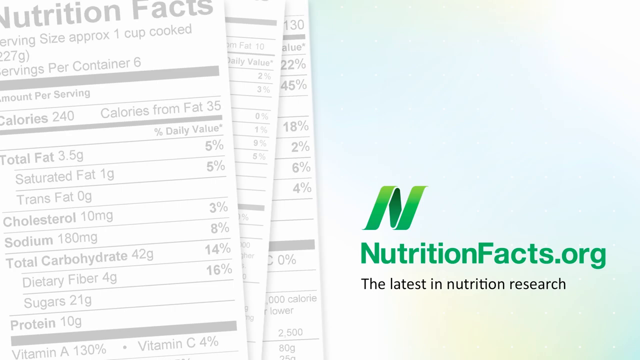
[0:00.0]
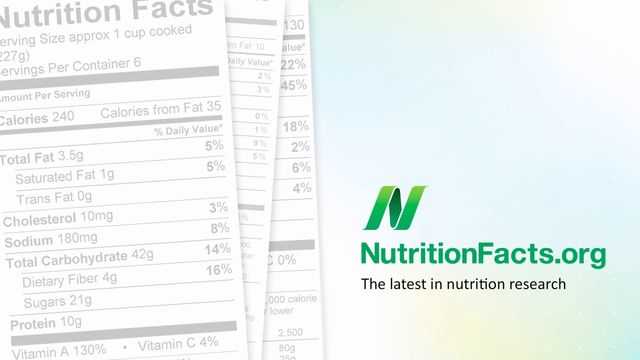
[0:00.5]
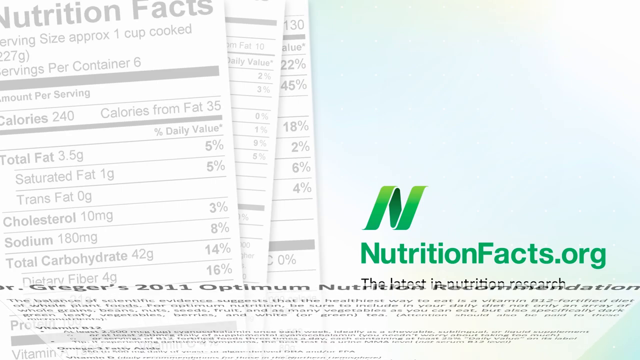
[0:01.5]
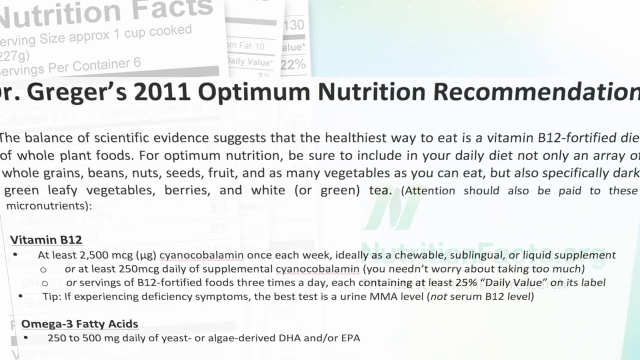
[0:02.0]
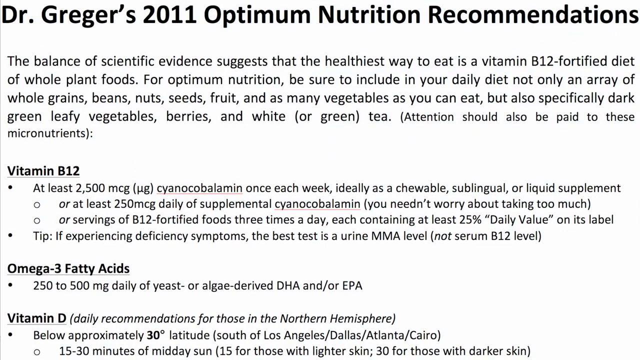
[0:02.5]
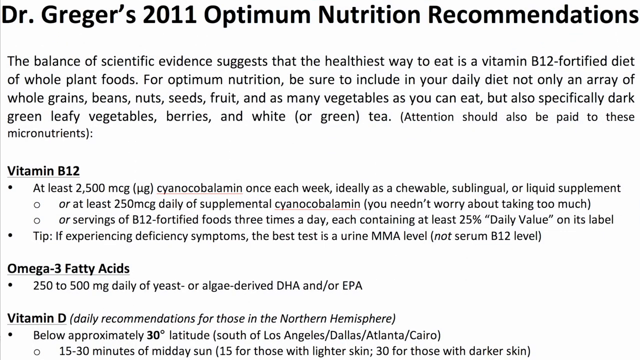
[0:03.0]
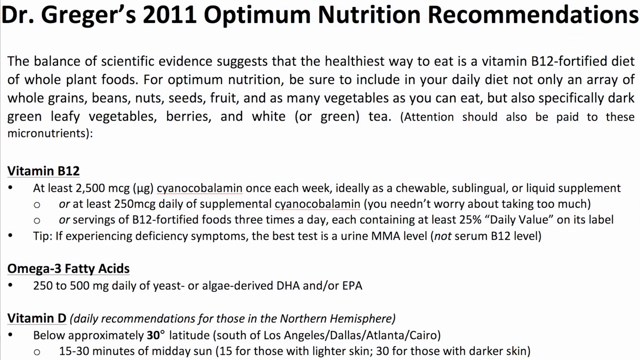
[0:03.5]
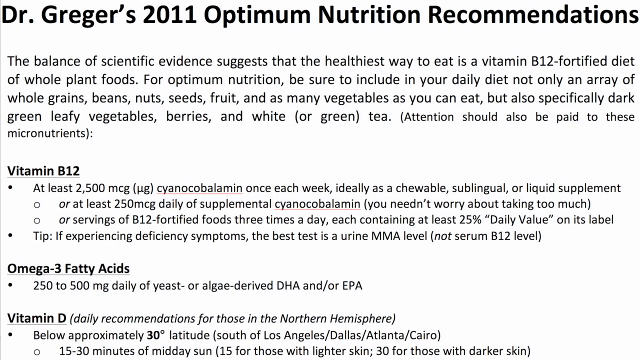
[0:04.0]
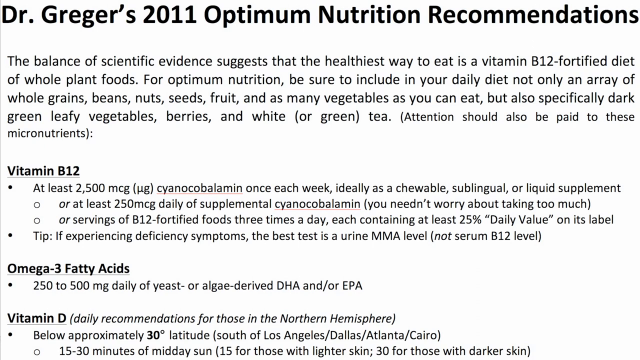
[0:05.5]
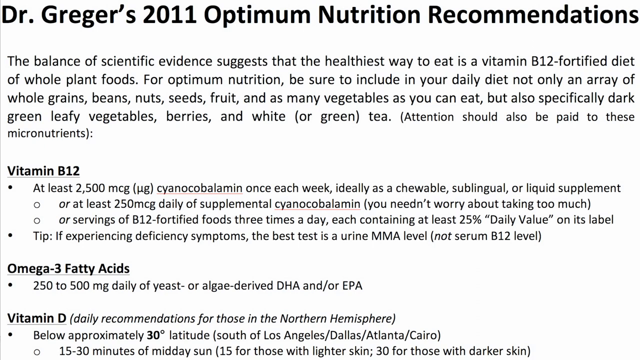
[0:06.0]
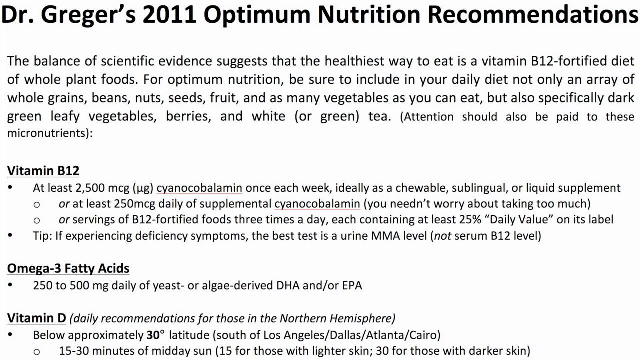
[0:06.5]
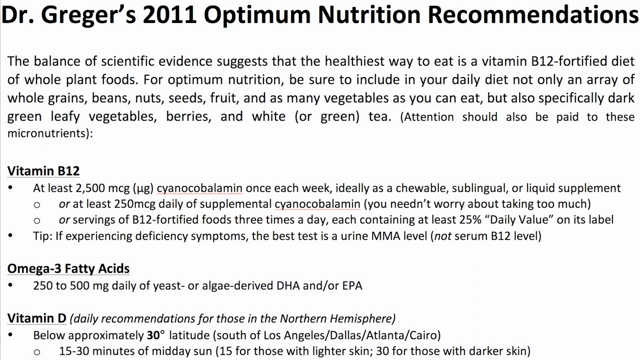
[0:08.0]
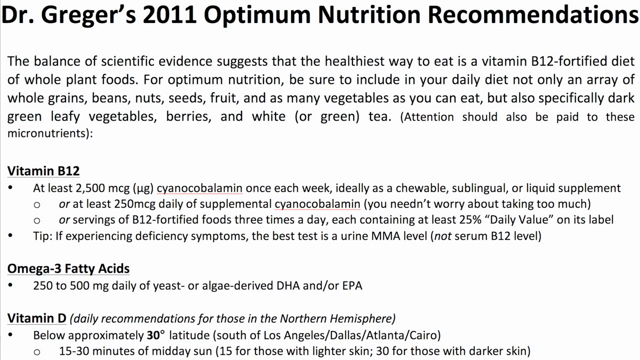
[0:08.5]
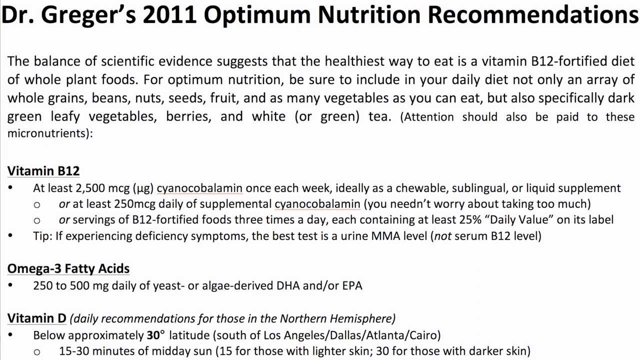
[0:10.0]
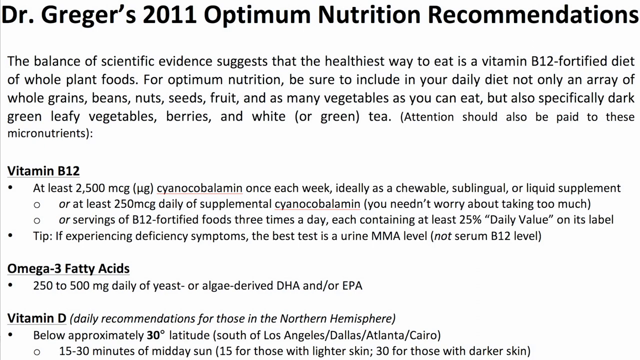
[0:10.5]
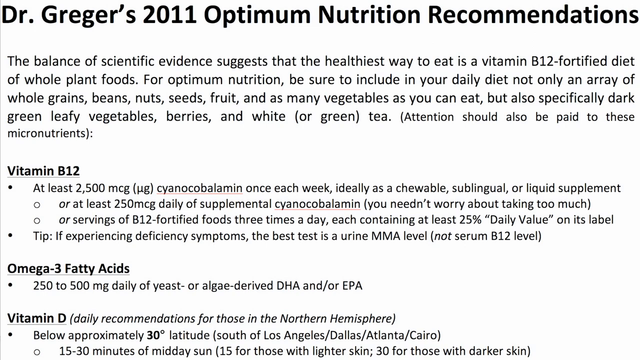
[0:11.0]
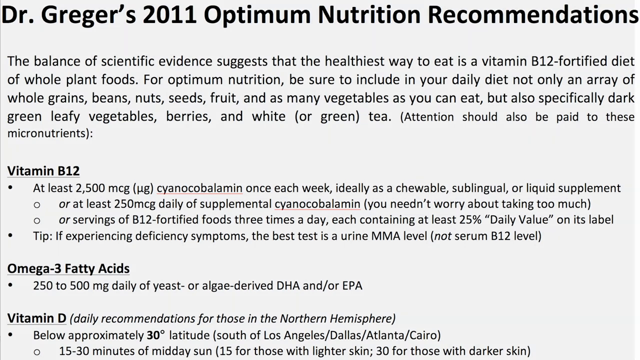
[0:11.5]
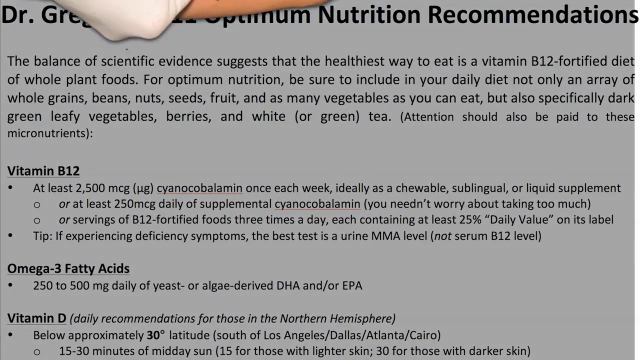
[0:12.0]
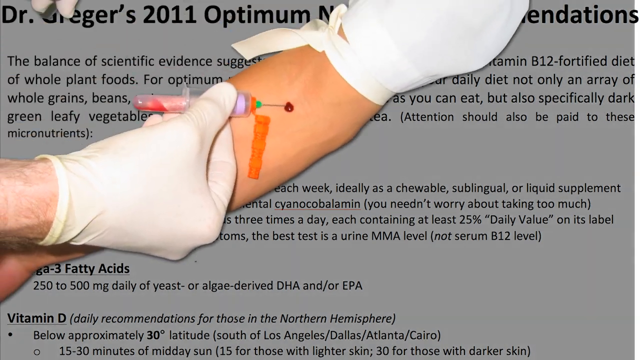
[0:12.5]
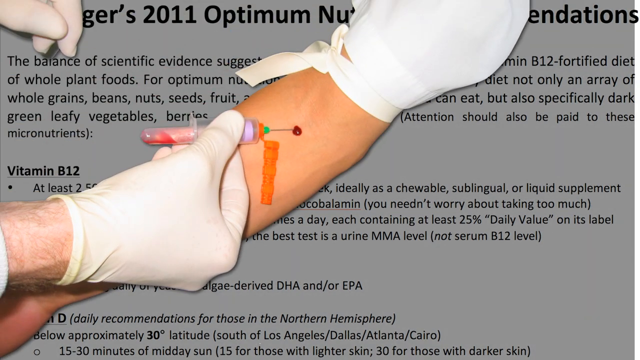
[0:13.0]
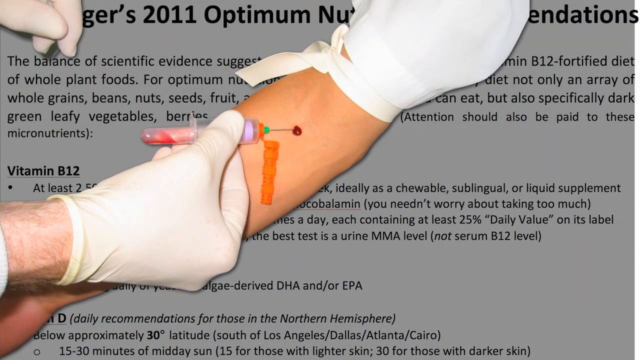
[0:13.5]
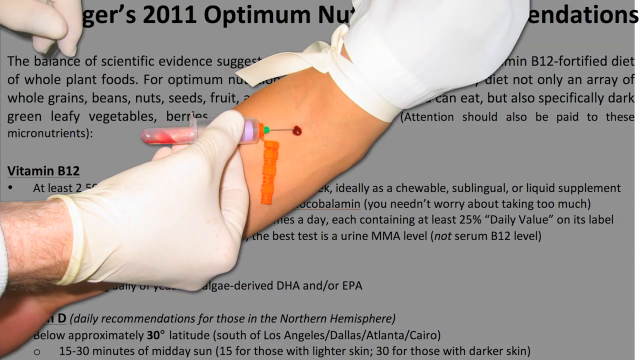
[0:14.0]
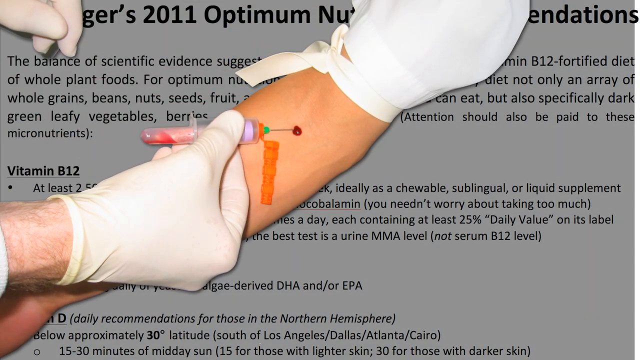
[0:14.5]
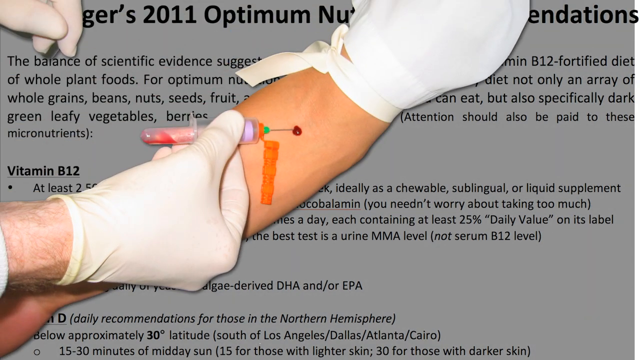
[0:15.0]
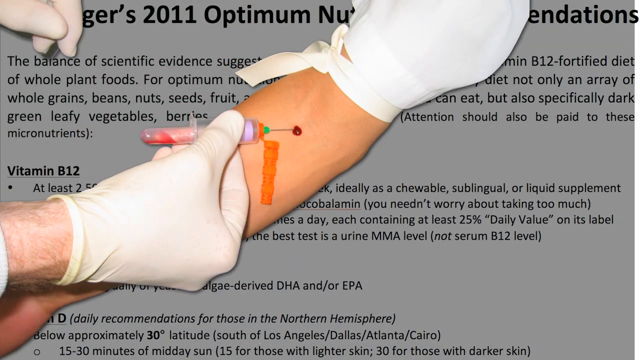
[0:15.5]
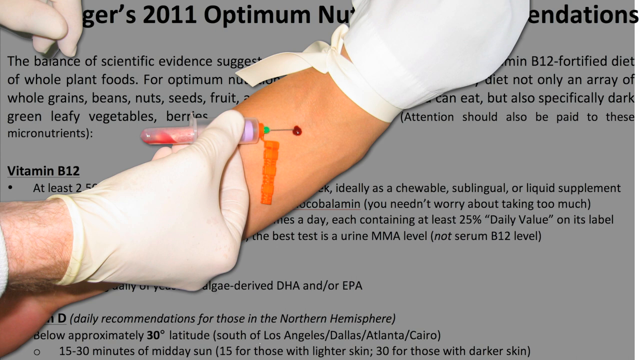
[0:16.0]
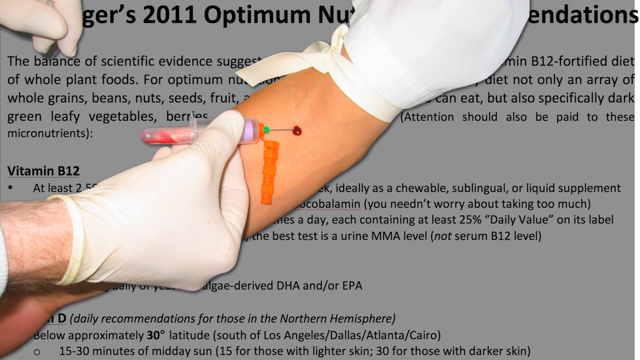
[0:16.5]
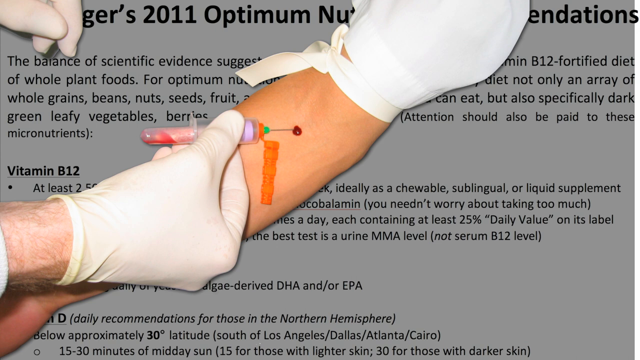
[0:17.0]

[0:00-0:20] The video opens with "NutritionFacts.org" in green text beside a green letter N logo, and underneath in black text it says "Latest in Nutrition Research." The background is light with some blue, and on the left are three overlaid images of nutrition facts like those found on the back of a food box. A white text image then flips onto the screen and covers the whole screen: a white background with black text that says "Dr. Greger's 2011 Optimum Nutrition Recommendations. The balance of scientific evidence suggests that the healthiest way to eat is a vitamin B12 fortified diet of whole plant foods." There is a lot of text on this screen: below, a "vitamin B12" heading has a few points under it, "omega-3 fatty acids" has one item under it, and "vitamin D" has some points of what look like facts or recommendations. That screen then dims, and an image of a held-out arm is overlaid. The arm has a white sleeve at the top and a rubber tourniquet band wrapped around it and tied with a bow. A speck of blood comes out of the arm where a needle is connected; a gloved hand holds the needle to the arm, and an orange cap that was covering the needle now hangs down. Some gloved fingers also appear at the top left of the screen, and the white-gloved person has a hairy wrist that is cut off out of frame on the left.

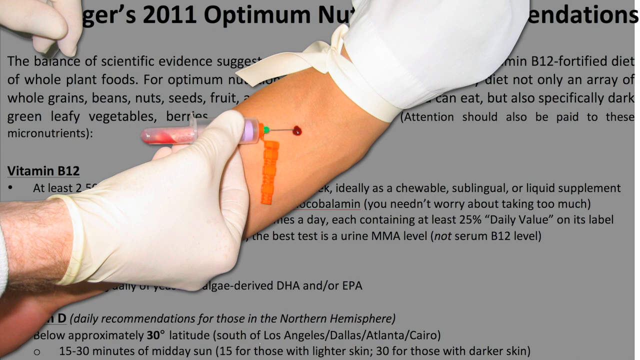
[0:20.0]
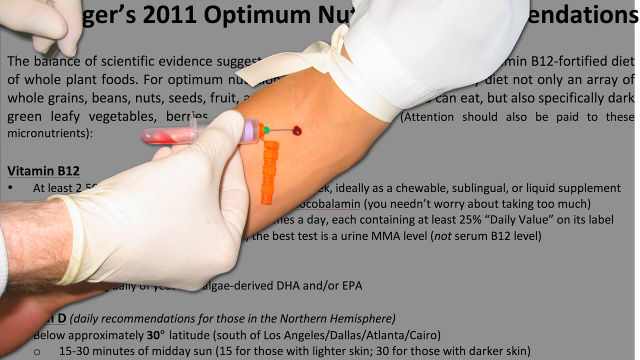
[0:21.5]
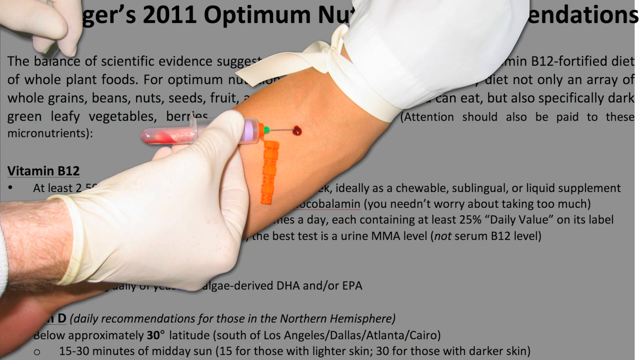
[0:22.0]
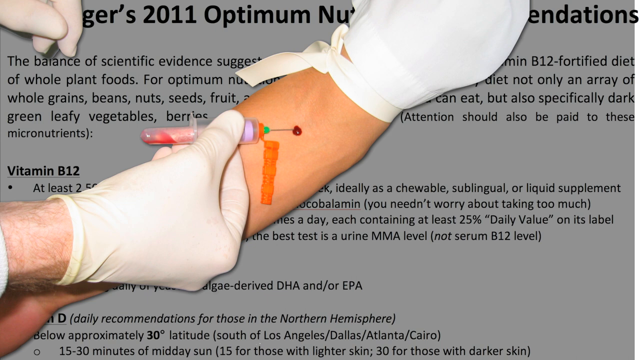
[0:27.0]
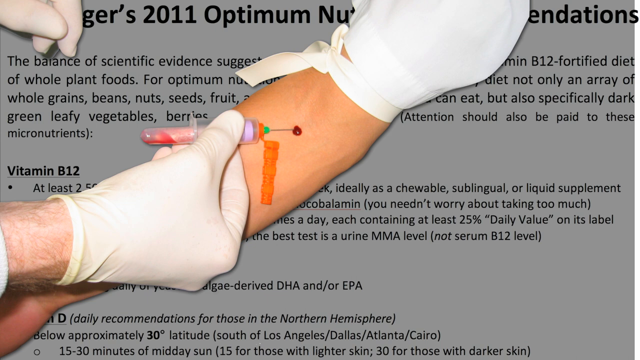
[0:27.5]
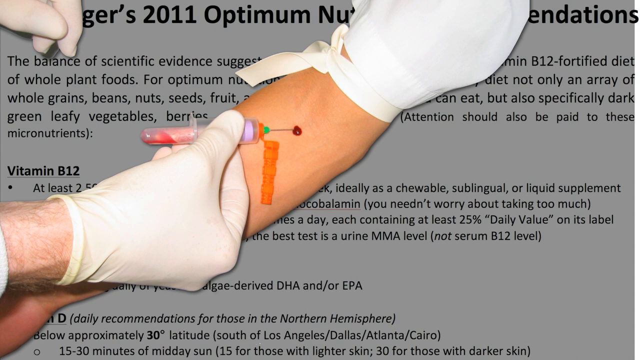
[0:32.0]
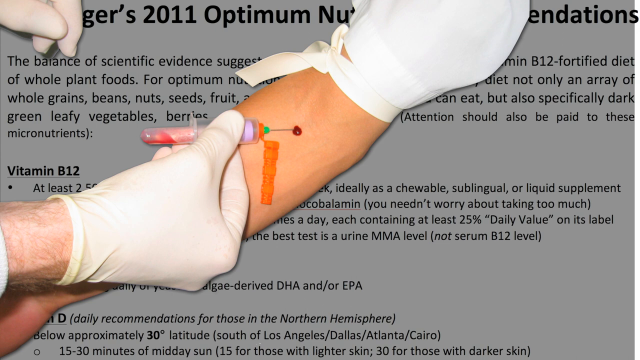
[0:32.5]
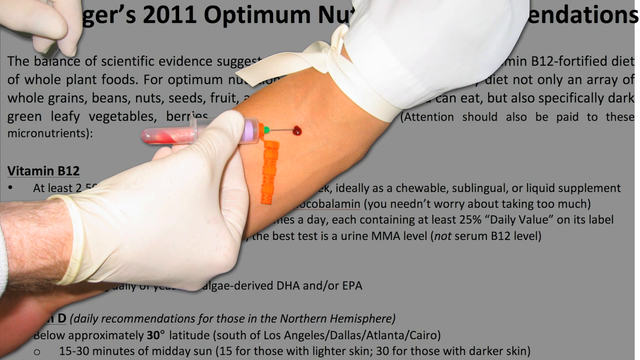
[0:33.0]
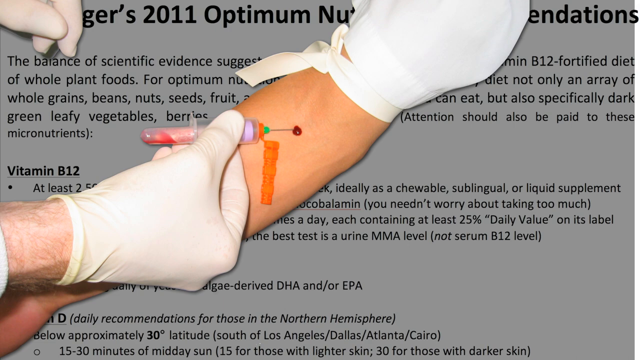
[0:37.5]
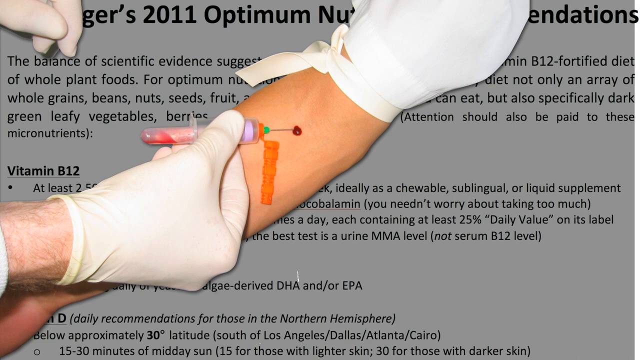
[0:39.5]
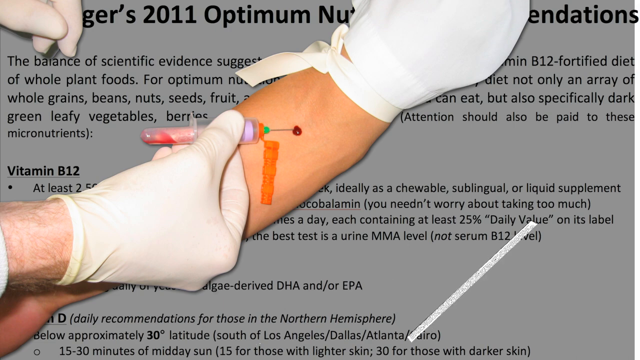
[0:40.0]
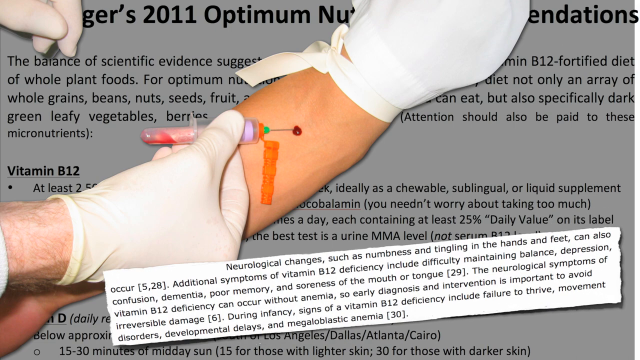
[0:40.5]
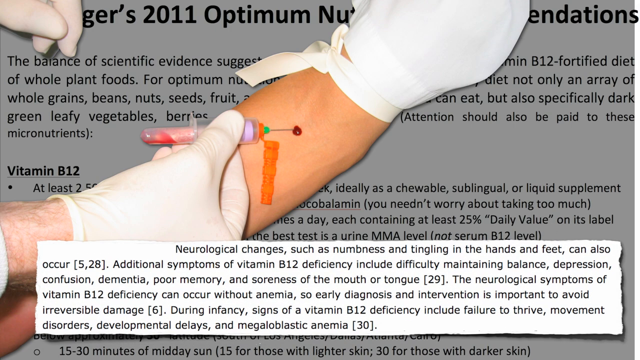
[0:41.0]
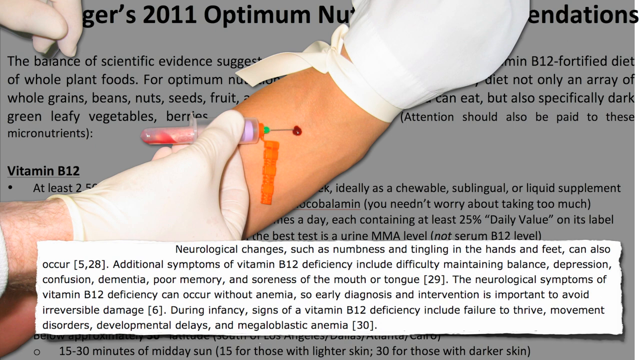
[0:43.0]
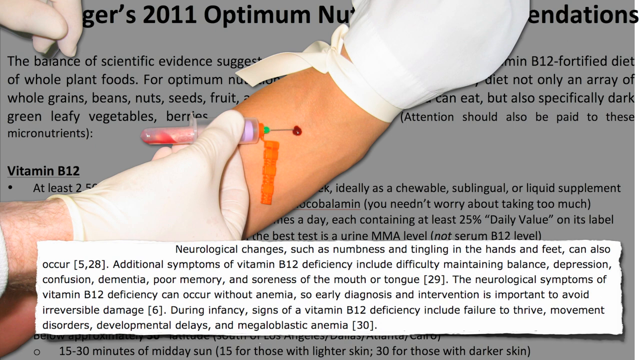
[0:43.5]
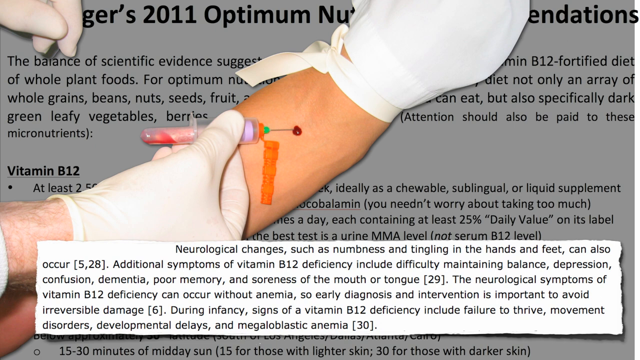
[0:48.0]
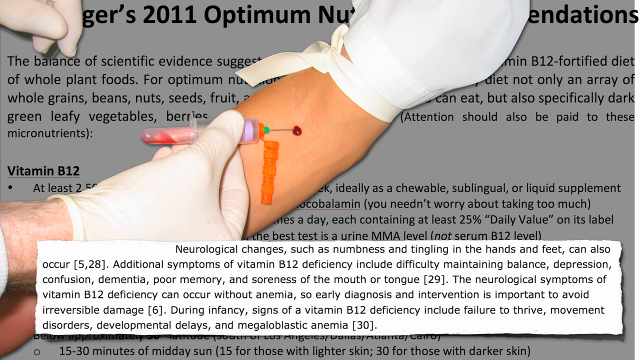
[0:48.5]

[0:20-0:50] The same image of the arm with the needle in it, and blood pooling where the needle pokes in, remains on the screen in front of the dimmed background that holds all the text. The person's hand is slightly visible on the left, but the rest is cut off. Text then flips onto the screen in a white box that says "neurological changes such as numbness and tingling in the hands and feet can also occur. Neurological symptoms of vitamin B12 deficiency include difficulty maintaining balance, depression, confusion, dementia, poor memory and soreness of the mouth or tongue. The neurological symptoms of vitamin B12 deficiency can occur without anemia. So early diagnosis and intervention is important to avoid irreversible damage. During infancy, signs of vitamin B12 deficiency include failure to thrive, movement disorders, mental delays, and megaloblastic anemia."